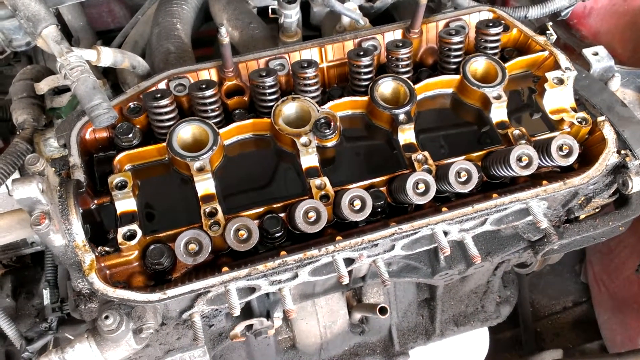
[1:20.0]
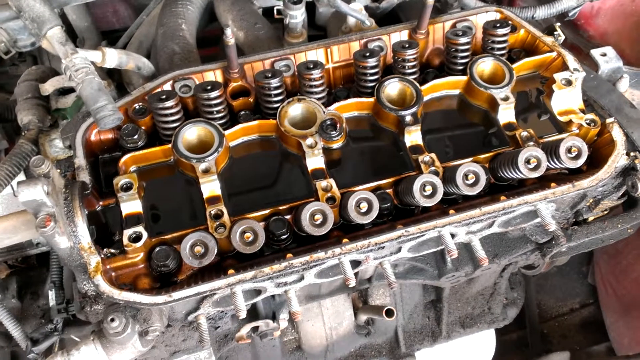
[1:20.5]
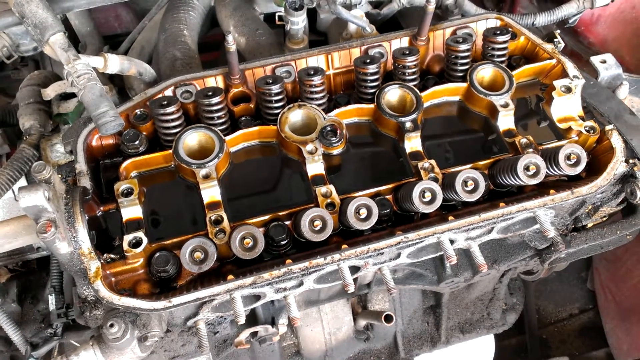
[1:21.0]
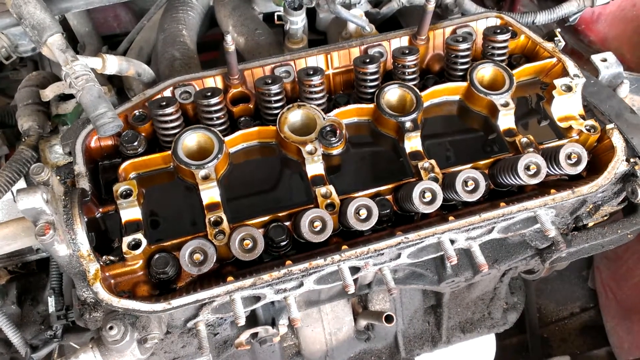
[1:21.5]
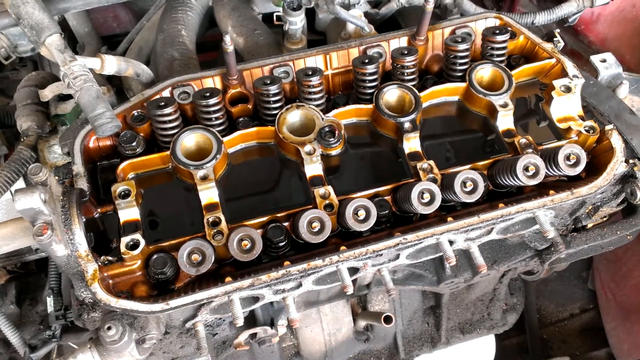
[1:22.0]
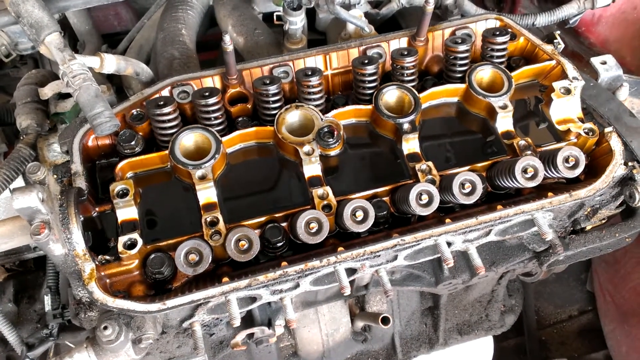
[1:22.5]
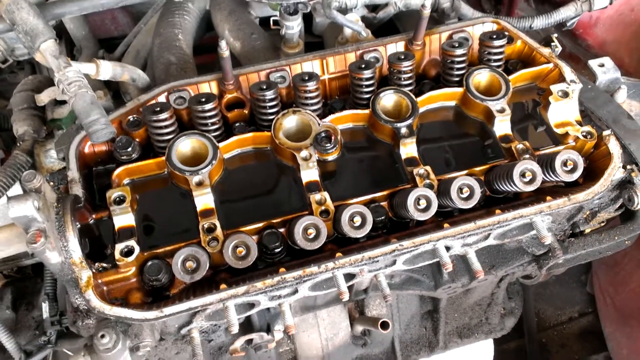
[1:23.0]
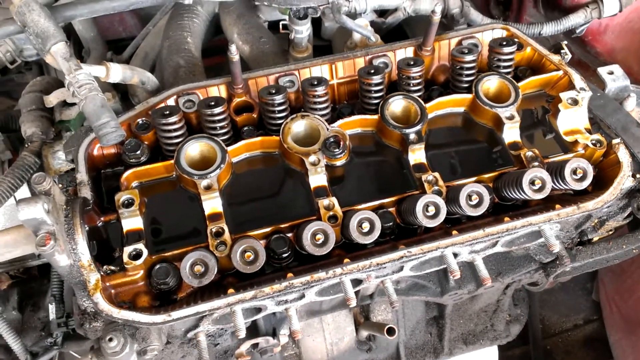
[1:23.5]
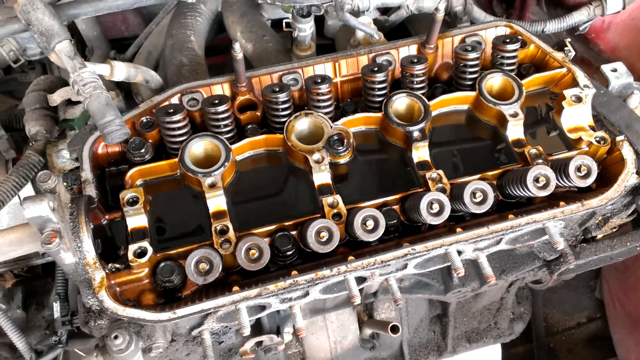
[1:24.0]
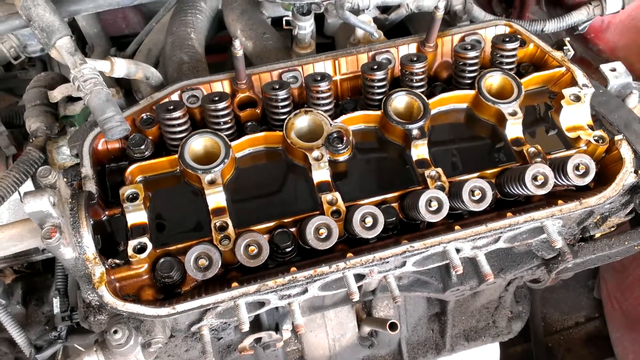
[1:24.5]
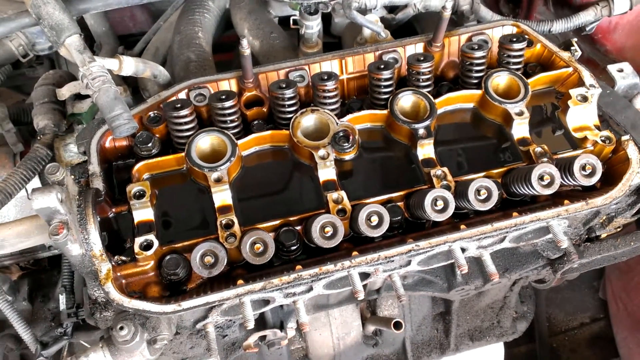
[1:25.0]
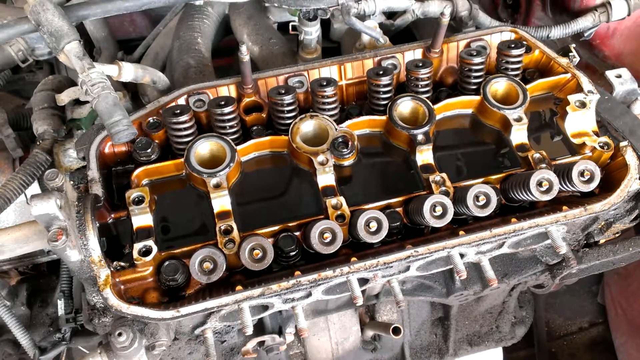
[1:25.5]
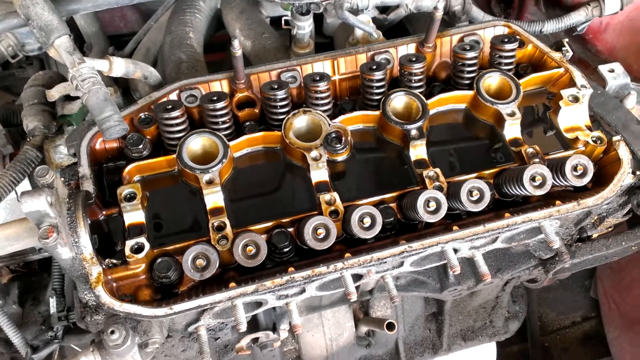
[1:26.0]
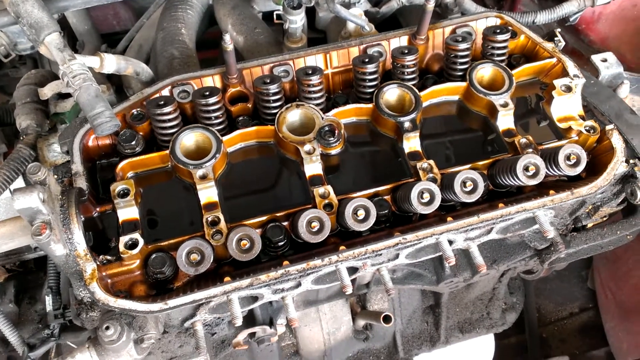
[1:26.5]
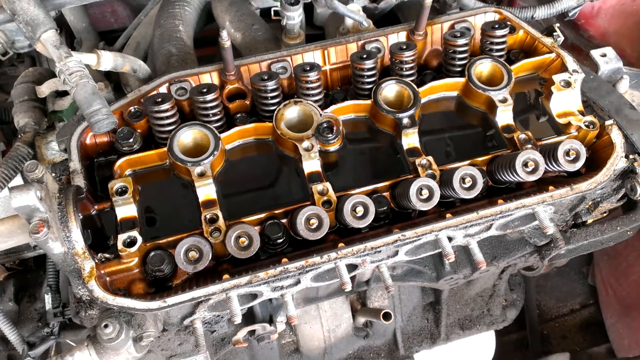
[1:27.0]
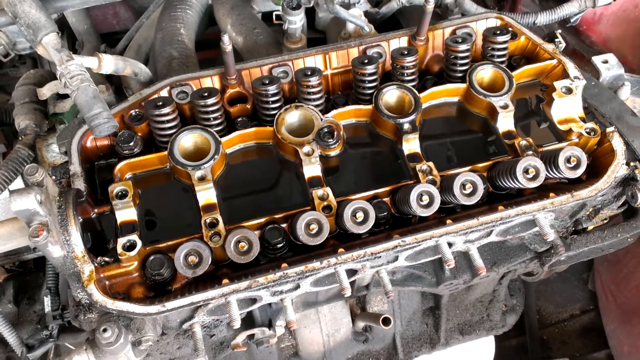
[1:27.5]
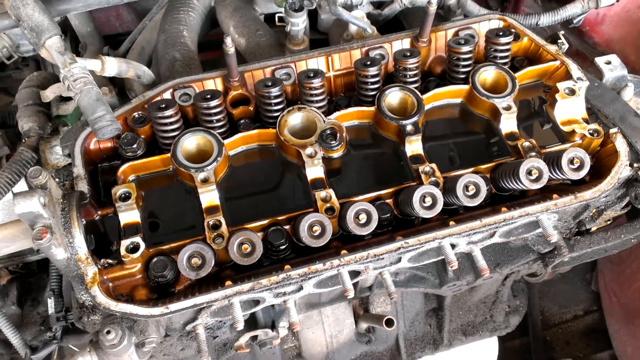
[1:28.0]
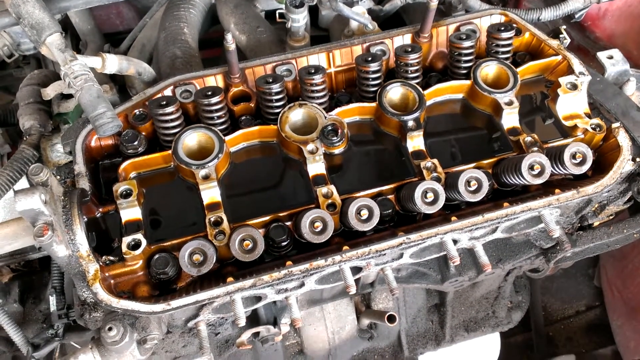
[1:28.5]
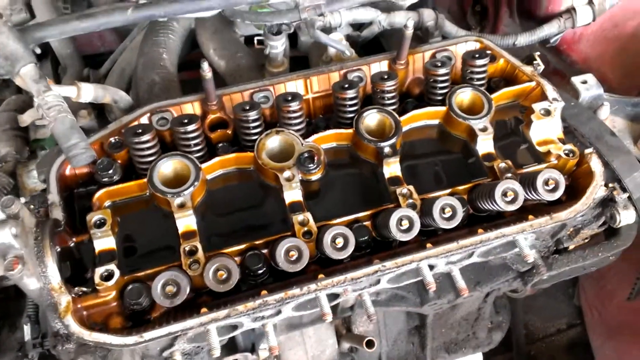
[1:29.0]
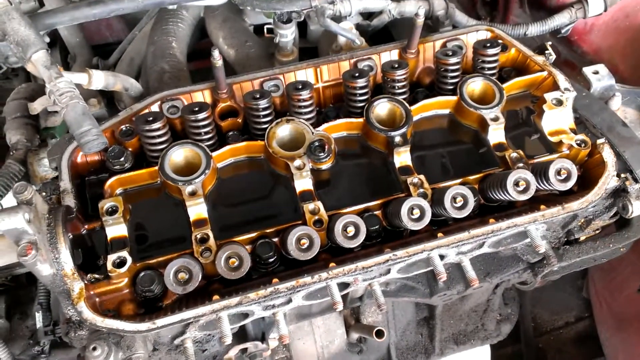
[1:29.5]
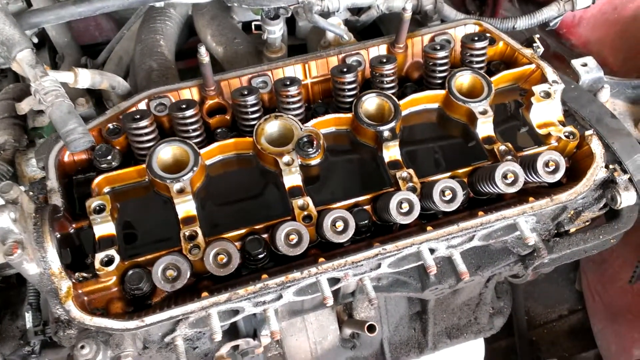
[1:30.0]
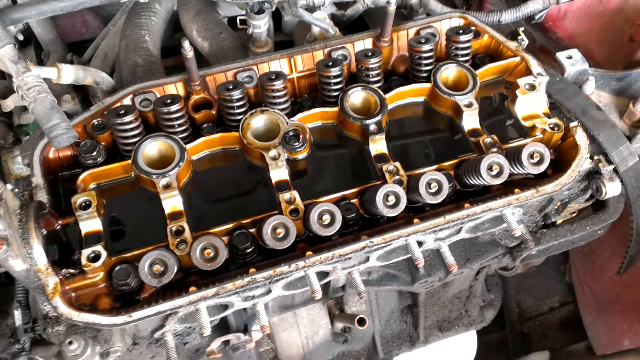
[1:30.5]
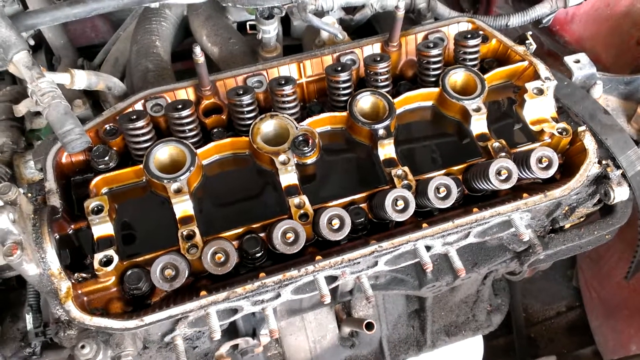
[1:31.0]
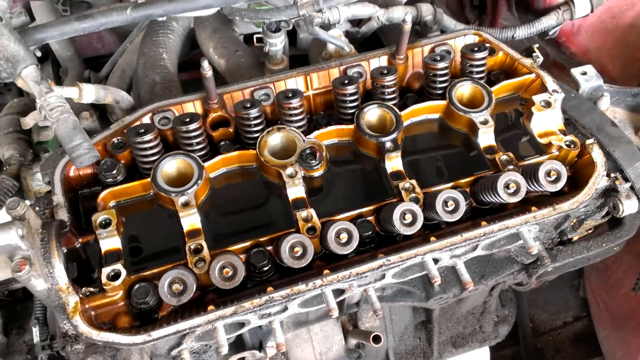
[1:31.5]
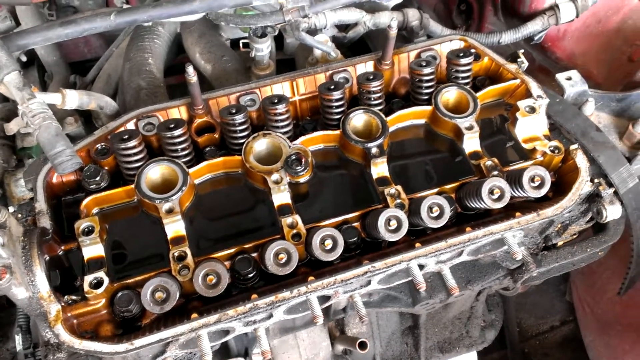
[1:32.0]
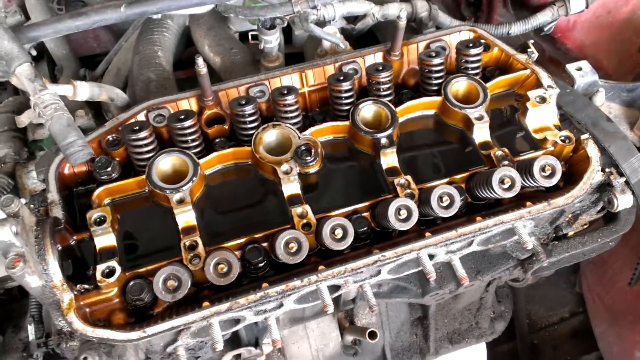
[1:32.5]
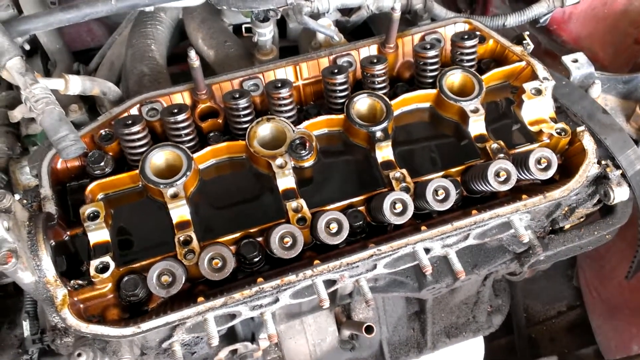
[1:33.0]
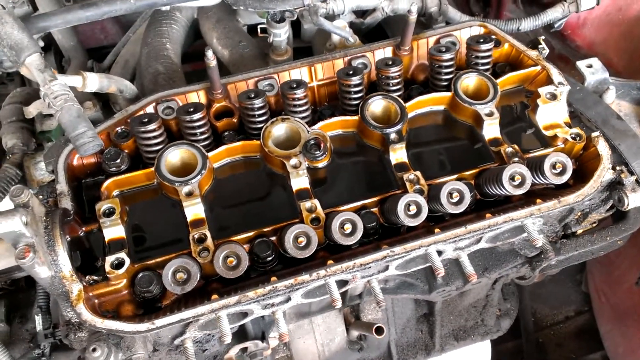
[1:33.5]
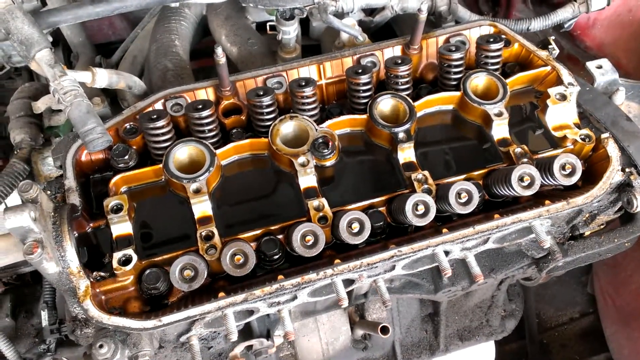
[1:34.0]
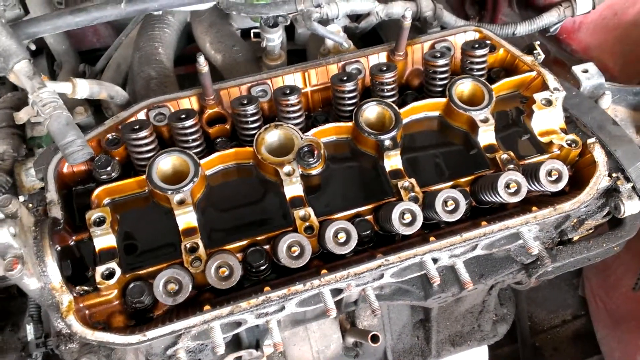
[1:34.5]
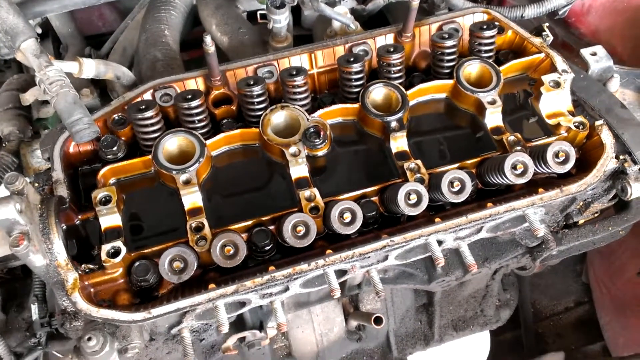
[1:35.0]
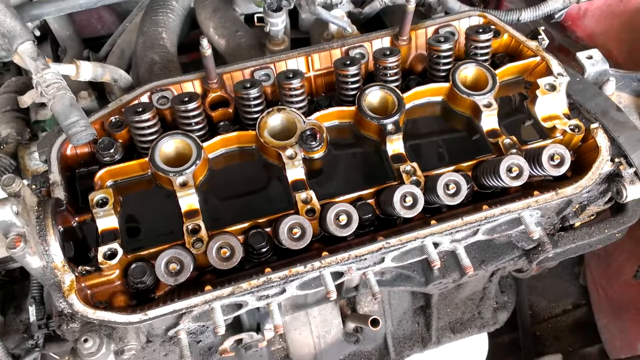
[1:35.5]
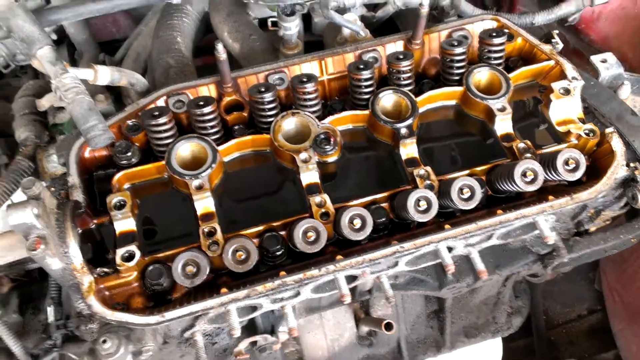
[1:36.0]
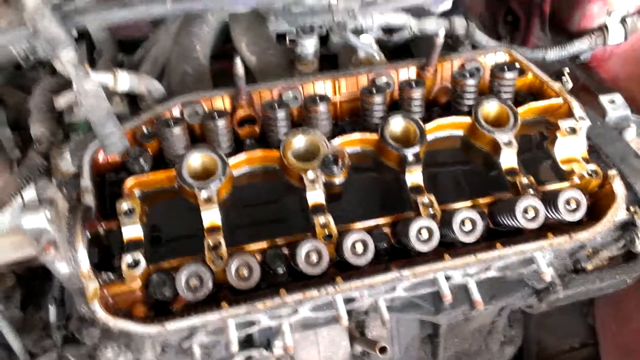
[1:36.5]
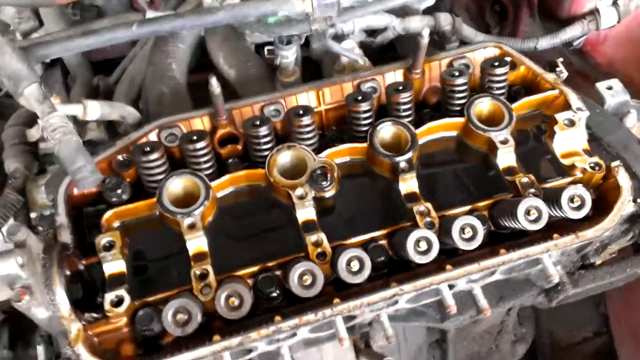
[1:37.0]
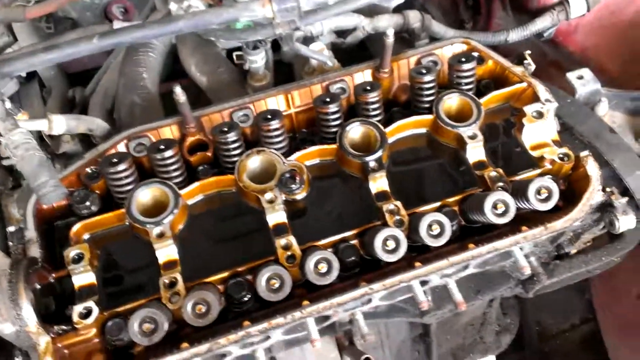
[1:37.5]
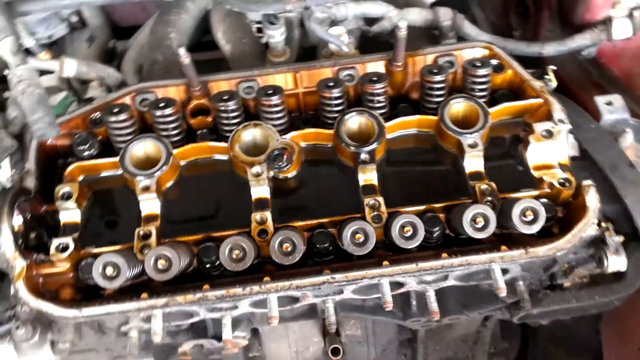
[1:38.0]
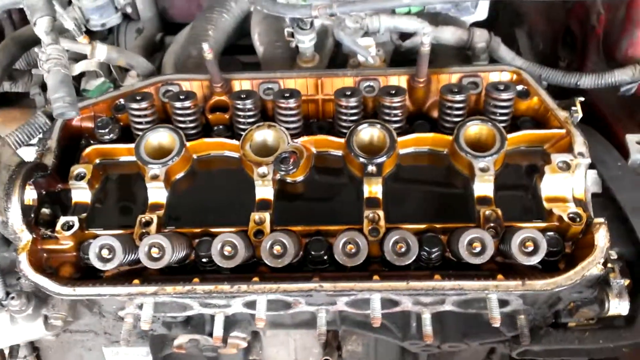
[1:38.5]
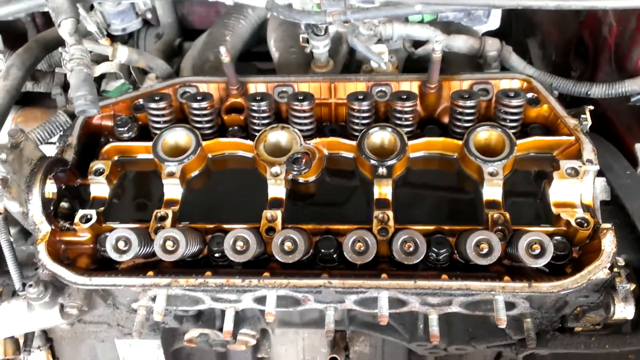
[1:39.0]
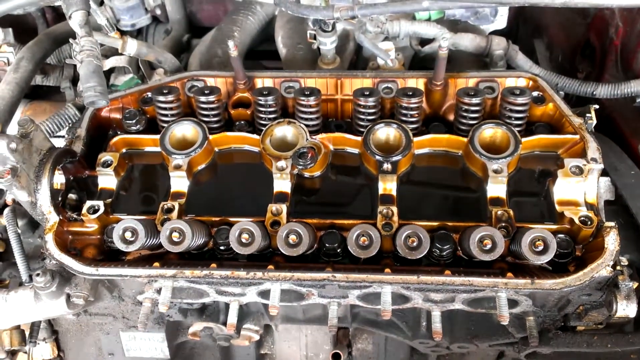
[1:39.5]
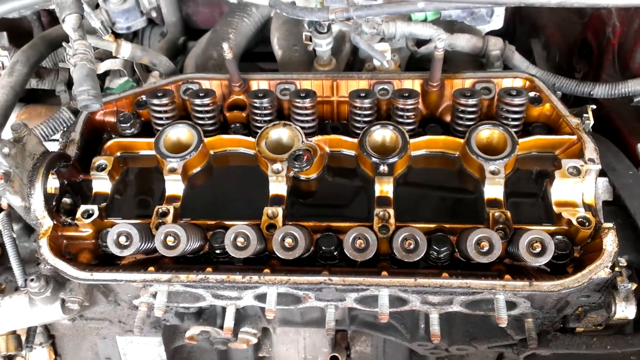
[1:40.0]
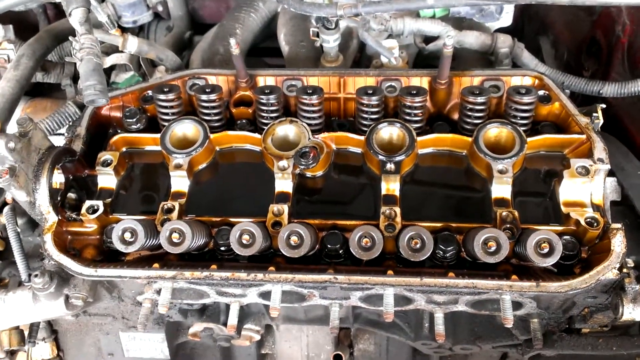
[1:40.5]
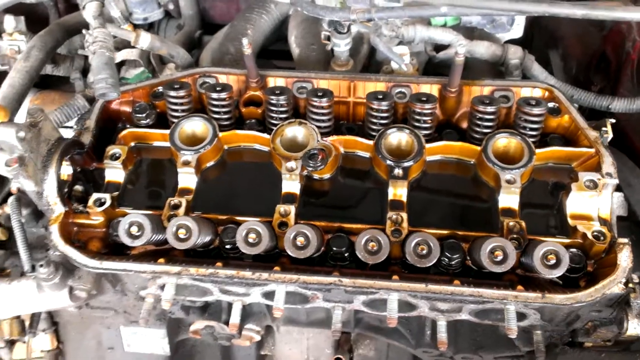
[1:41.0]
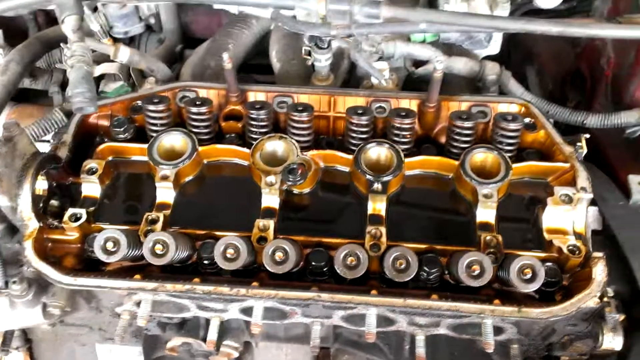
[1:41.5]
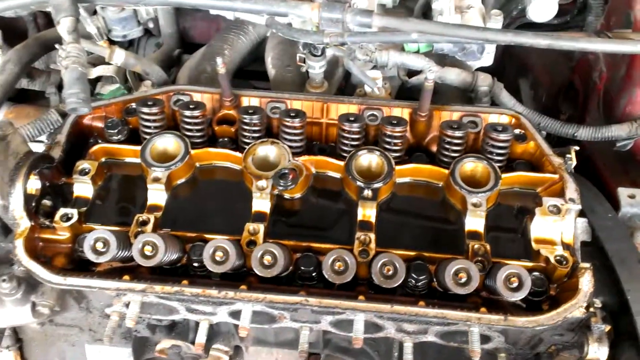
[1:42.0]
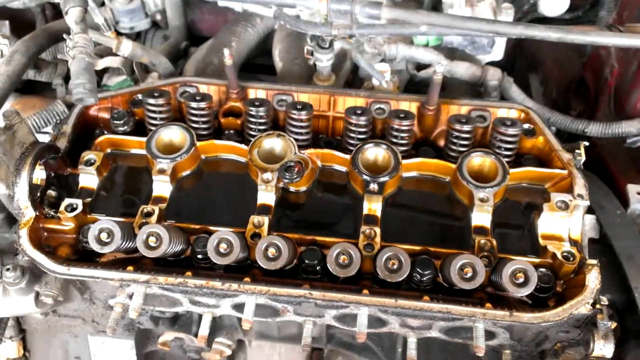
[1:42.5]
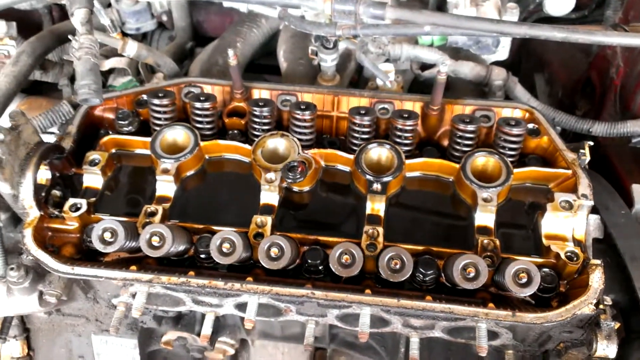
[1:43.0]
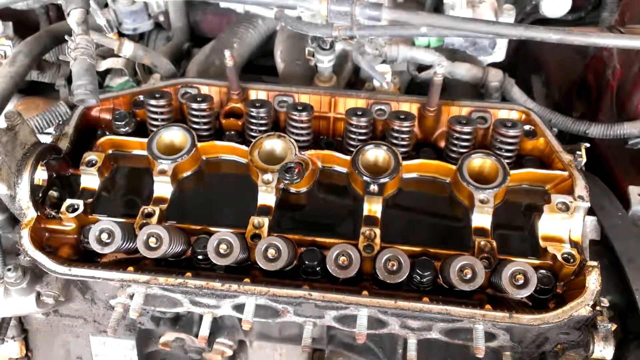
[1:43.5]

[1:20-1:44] The video continues to show the piece of machinery in the vehicle with four bolts in the middle, eight smaller bolts at the top and eight smaller bolts at the bottom. The view is sort of panned out a little more, showing many of the hoses and tubes connected to the machinery. The camera then pans down to the rectangular pan underneath the vehicle on a concrete platform, then pans back up, with a bit of the red vehicle on the right side of the screen and the can of WD-40 on the left side. The camera then moves in close on the piece of equipment in the middle of the vehicle, showing two black hoses leading from the top of the vehicle and several metal tubes and wires connected to the machinery.